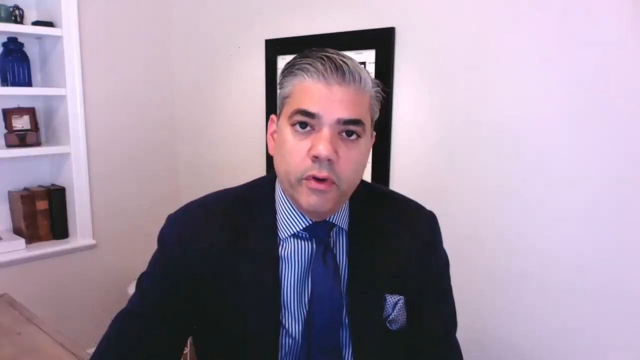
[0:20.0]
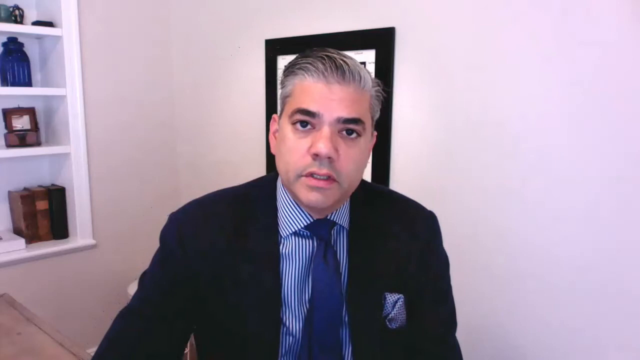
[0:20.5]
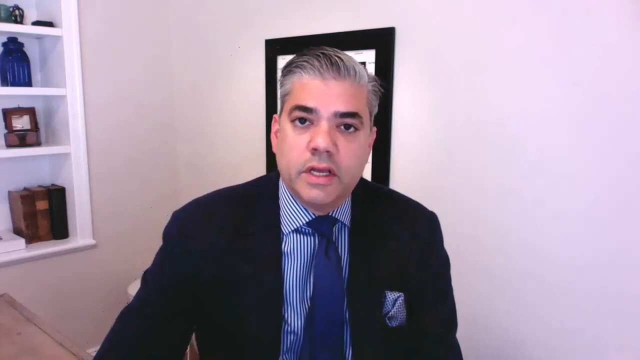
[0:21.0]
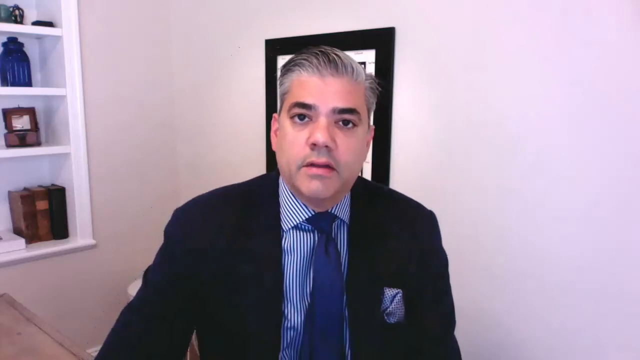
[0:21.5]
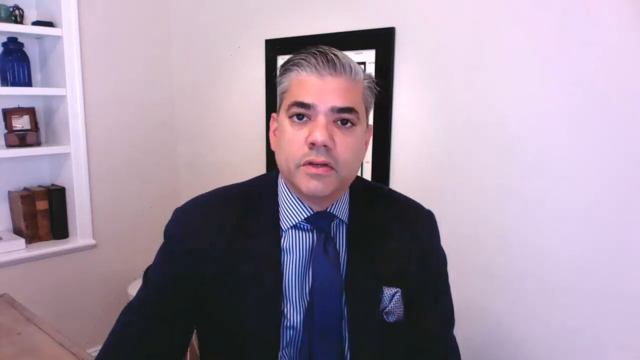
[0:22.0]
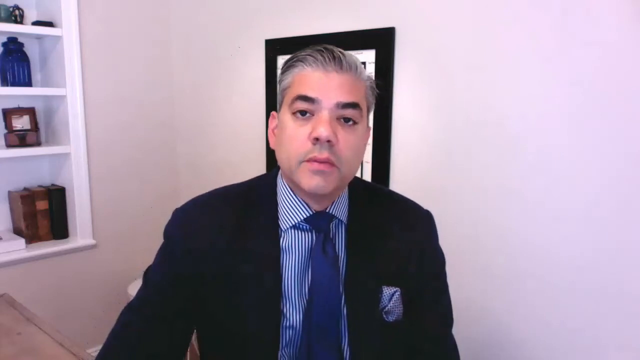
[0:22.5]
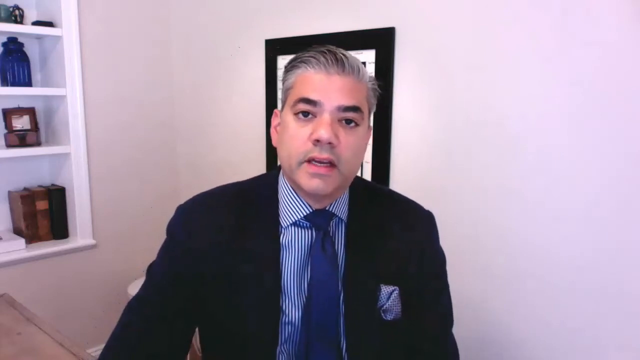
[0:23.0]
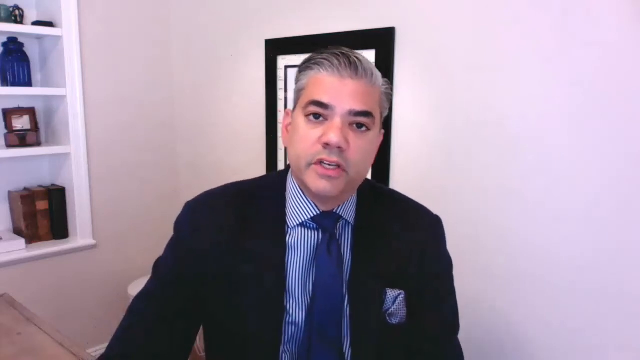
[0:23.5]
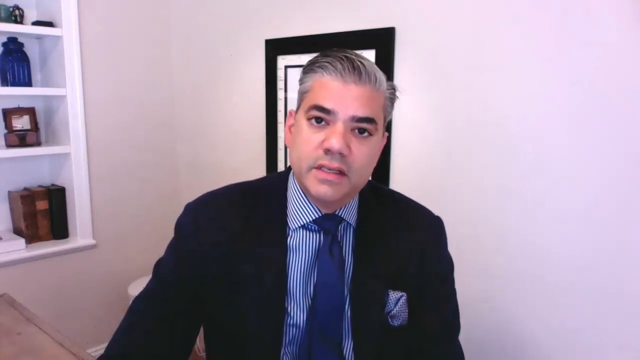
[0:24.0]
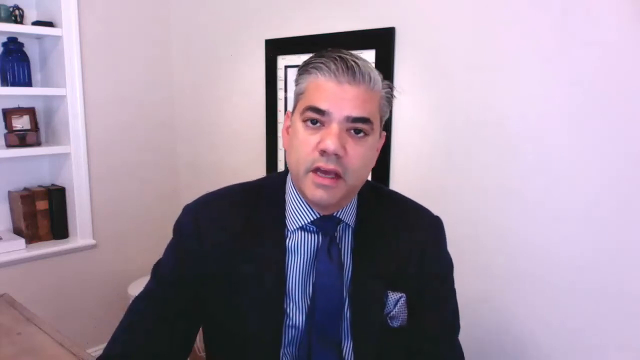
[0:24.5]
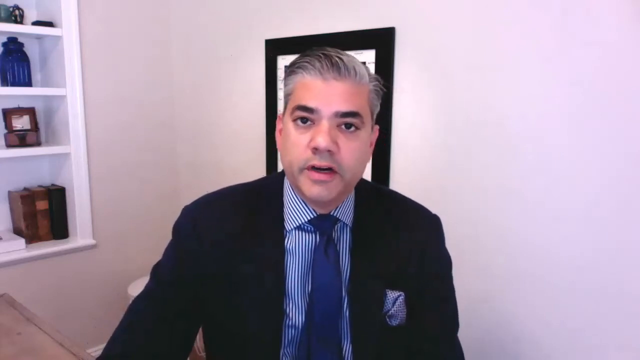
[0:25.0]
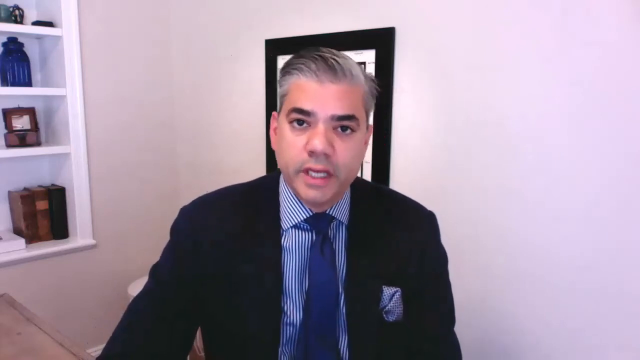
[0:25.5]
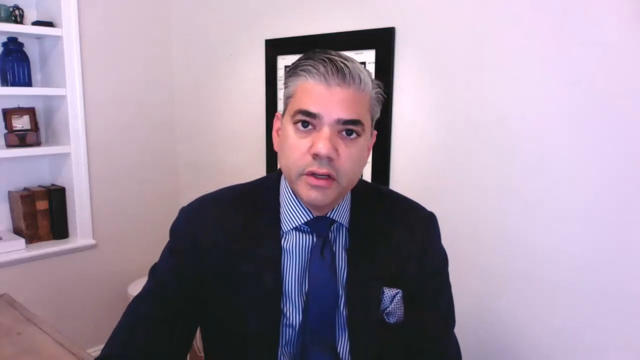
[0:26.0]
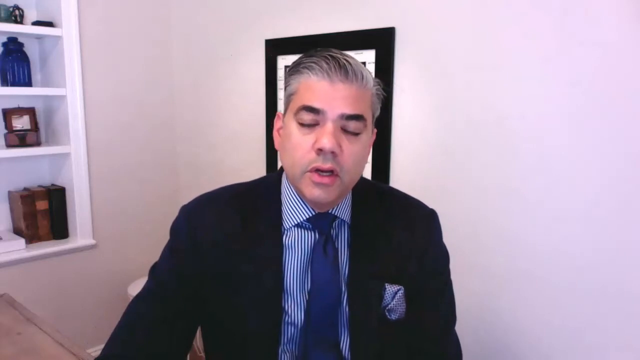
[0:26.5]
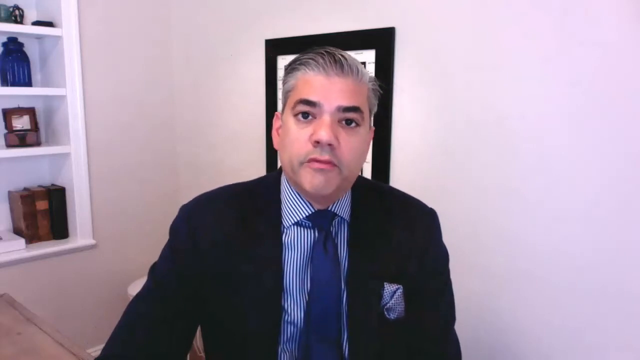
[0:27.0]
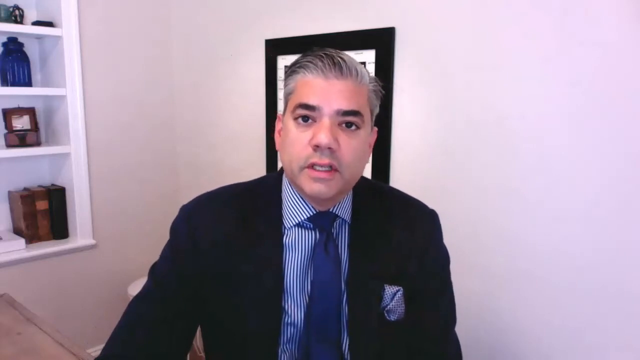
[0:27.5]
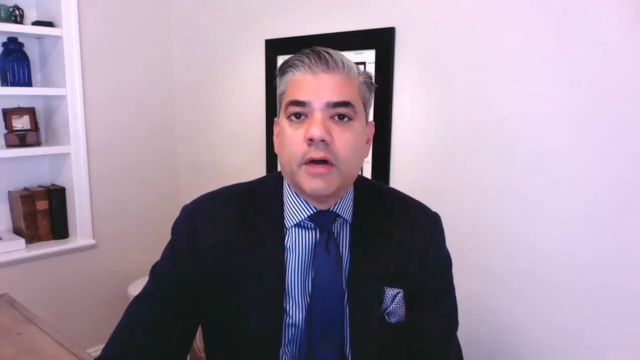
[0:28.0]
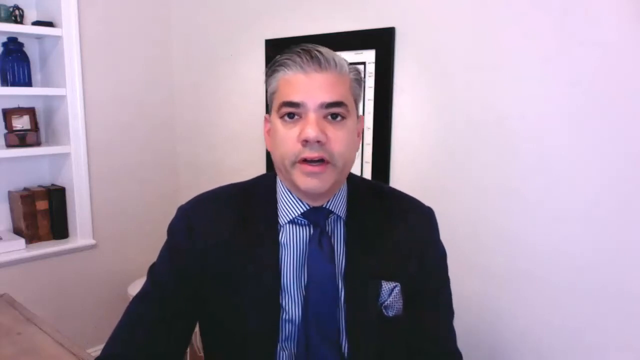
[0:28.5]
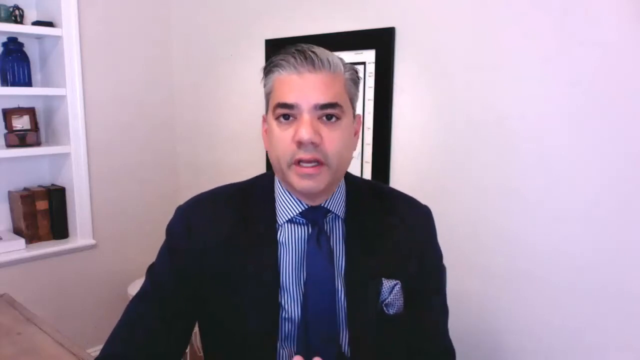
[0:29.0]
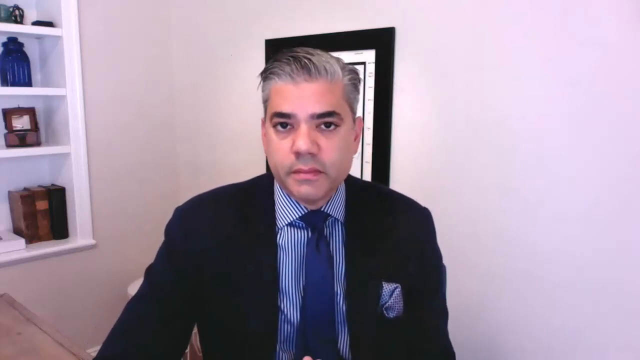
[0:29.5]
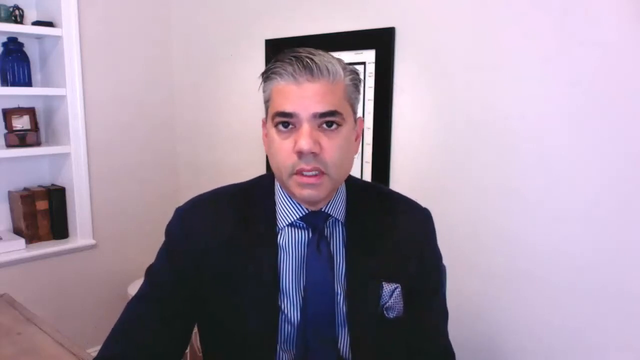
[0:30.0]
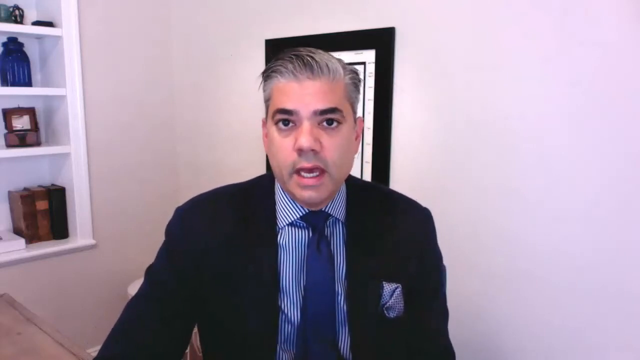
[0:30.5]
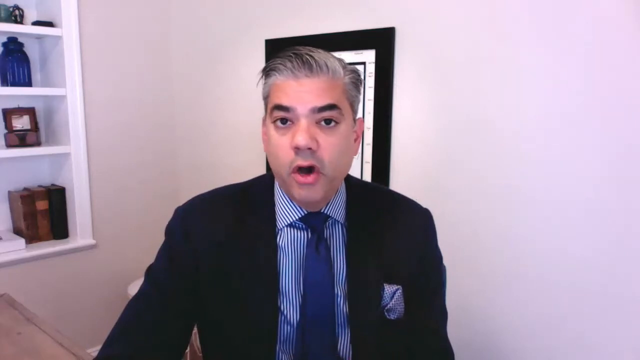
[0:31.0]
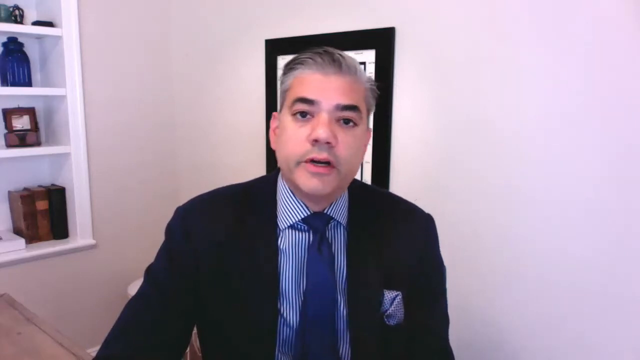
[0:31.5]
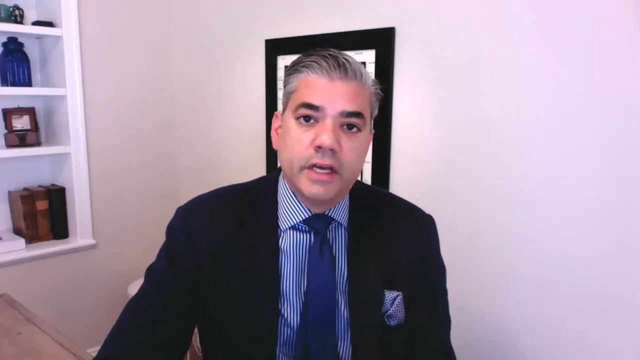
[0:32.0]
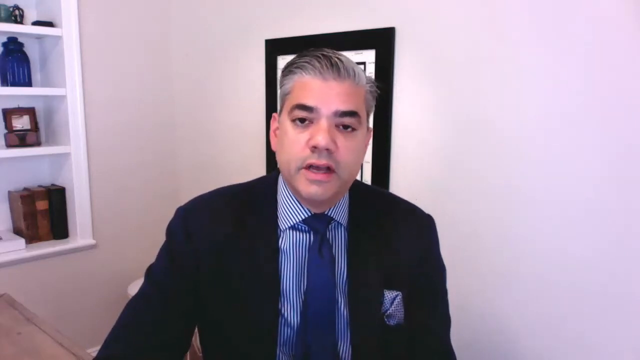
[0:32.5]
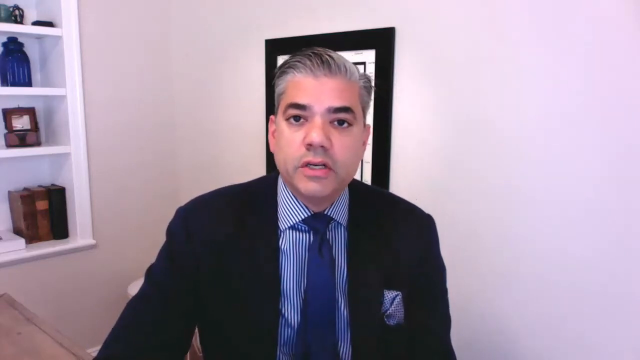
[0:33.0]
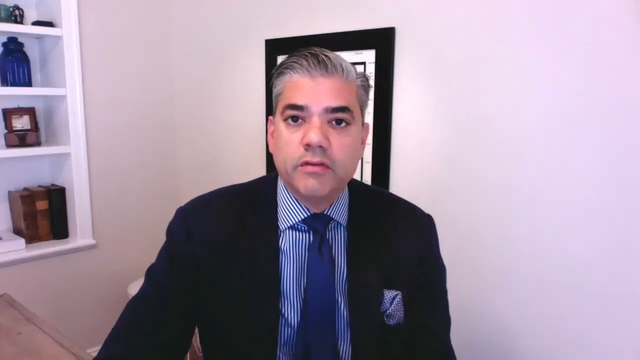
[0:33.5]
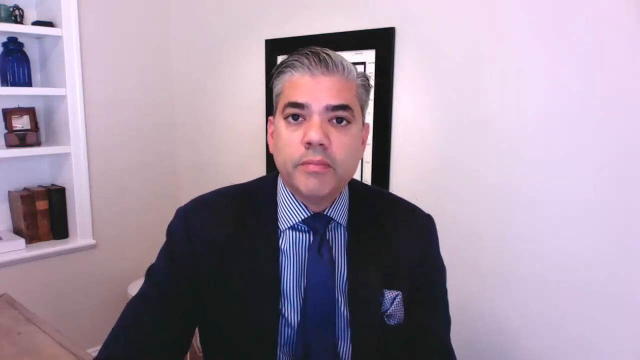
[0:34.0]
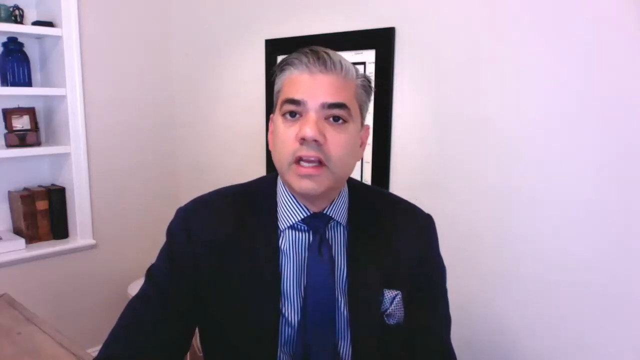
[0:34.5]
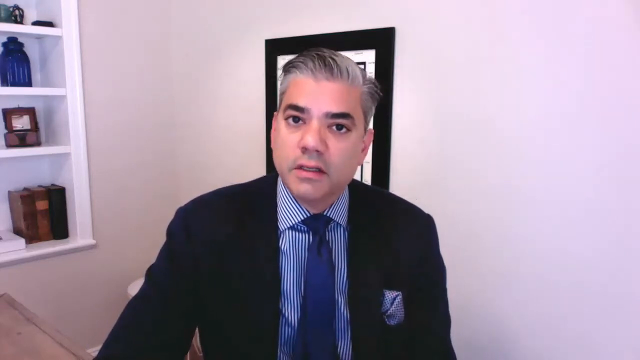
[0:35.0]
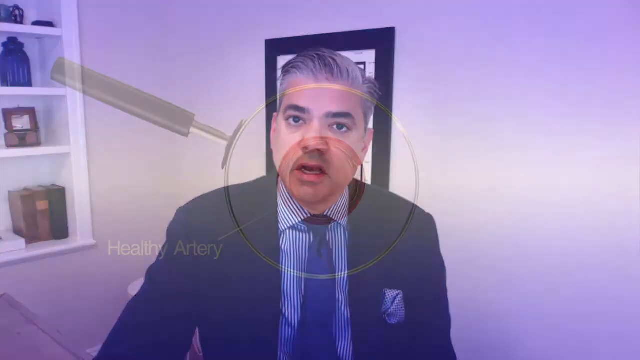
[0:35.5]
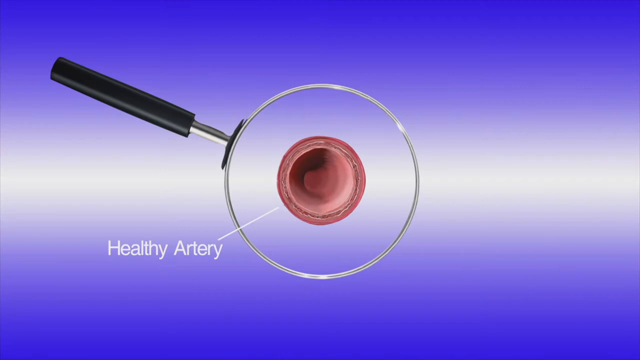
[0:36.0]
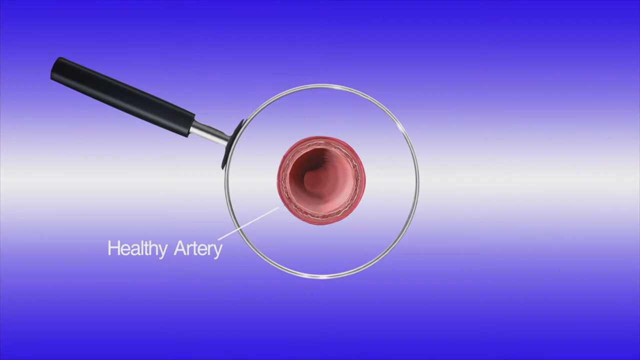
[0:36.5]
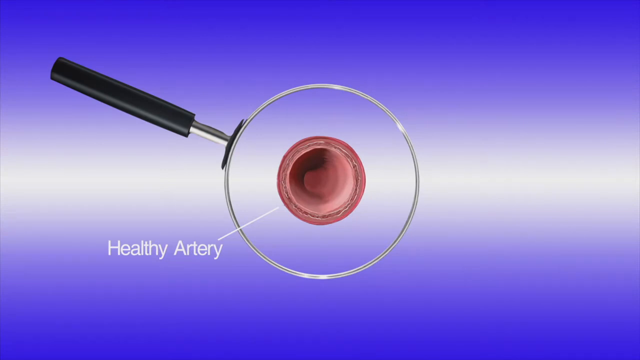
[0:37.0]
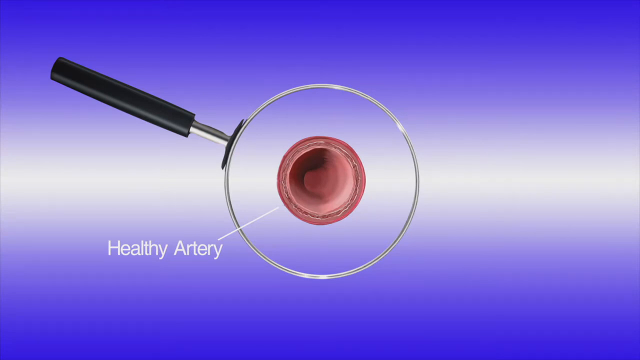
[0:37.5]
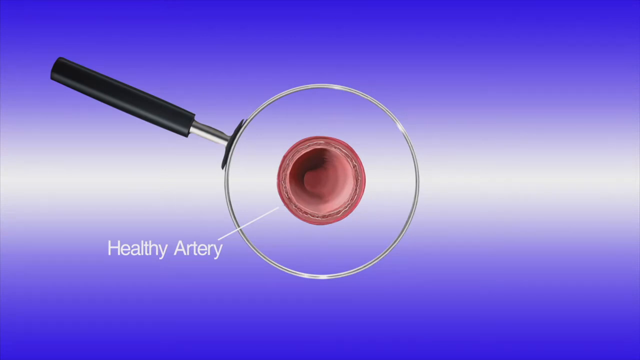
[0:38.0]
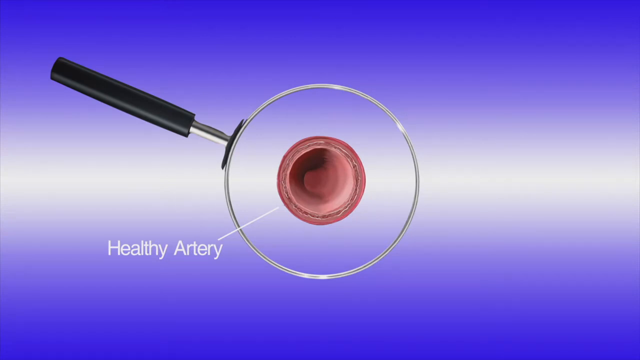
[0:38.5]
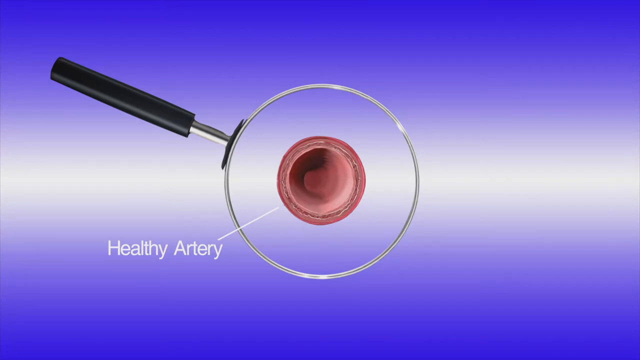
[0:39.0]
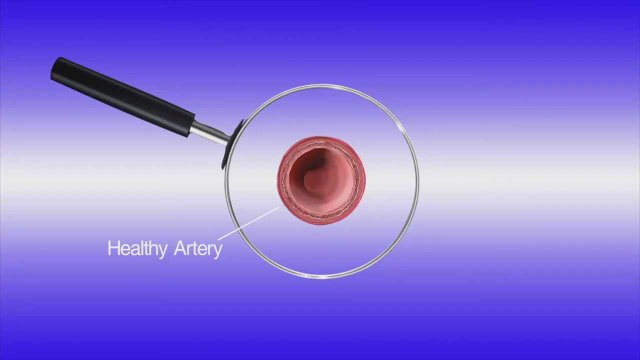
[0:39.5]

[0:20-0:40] The doctor wears a blue suit, a blue and white striped shirt, a blue tie and a pocket square in his breast pocket. He looks like he is talking to the camera in a one-to-one style, centered in the frame, his body taking up most of the center of the image. To his right, on the viewer's left, is a white bookshelf holding a couple of books, and above it are a vase and some ornaments of some sort, so the room appears to be a study. Directly behind him is a picture frame, mostly obscured by his head, on an off-white wall. The video then transitions to what looks like a magnifying glass with a circle in its center, annotated "healthy artery" with a line pointing to the circle, apparently showing a view down a clear artery.